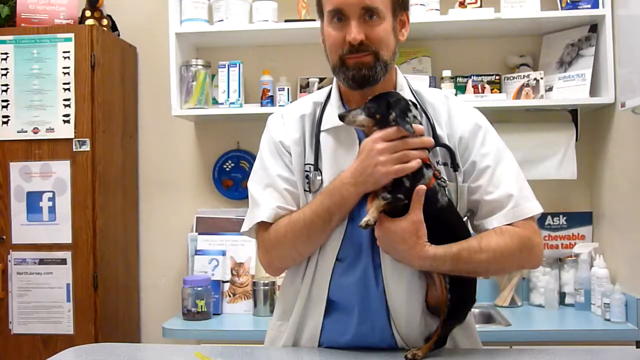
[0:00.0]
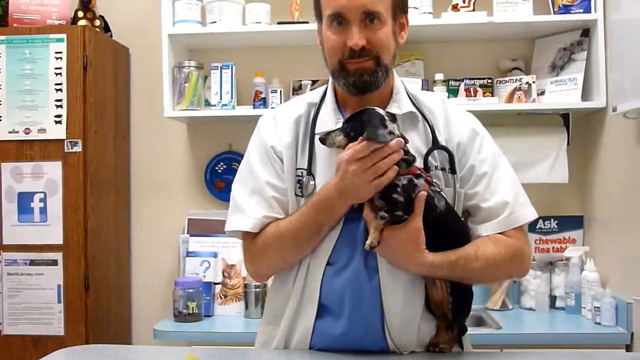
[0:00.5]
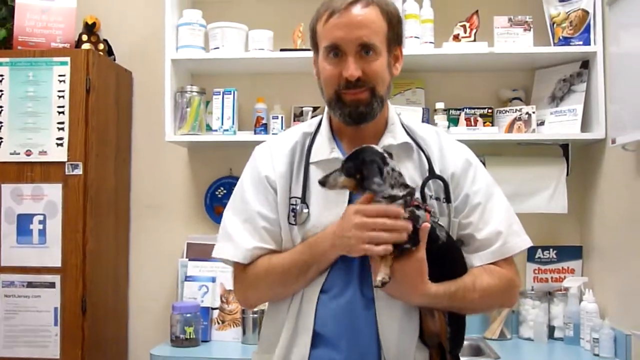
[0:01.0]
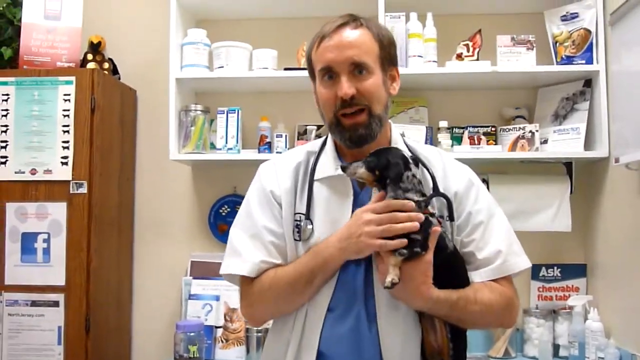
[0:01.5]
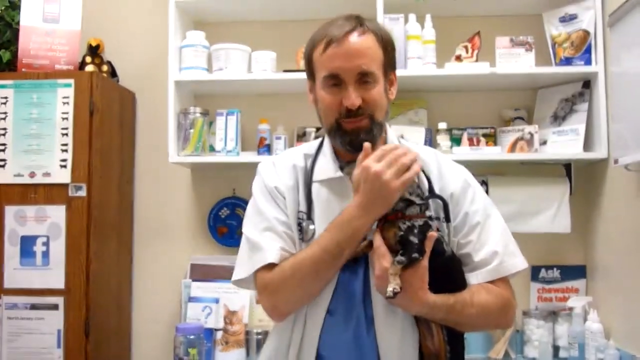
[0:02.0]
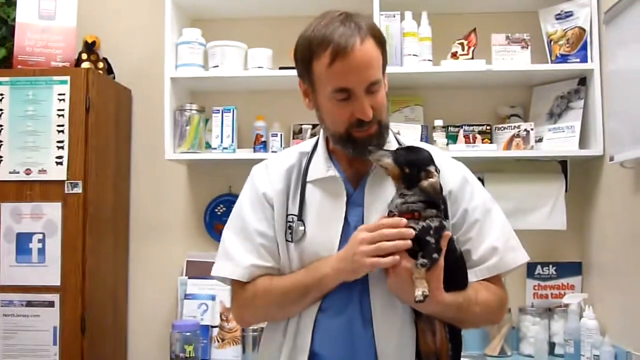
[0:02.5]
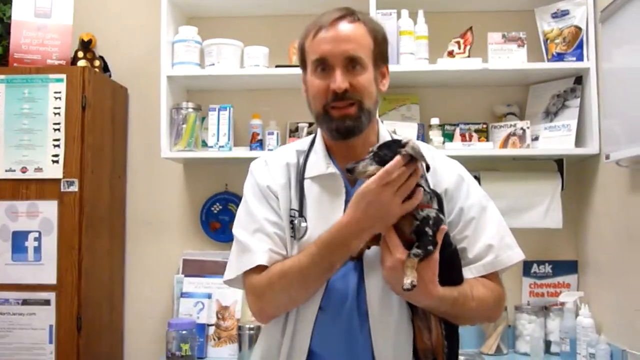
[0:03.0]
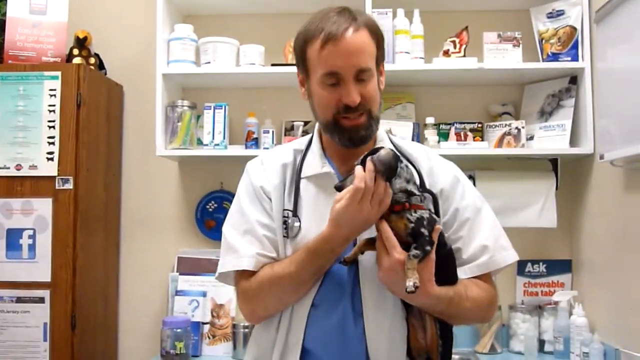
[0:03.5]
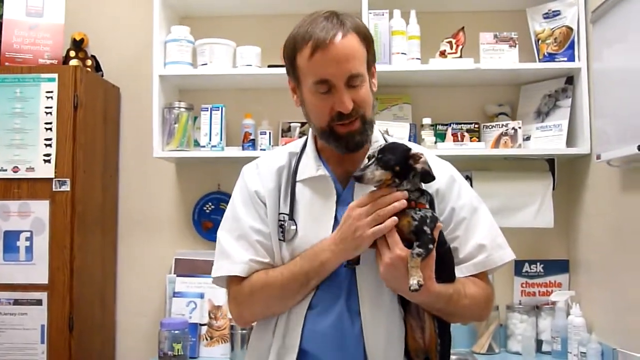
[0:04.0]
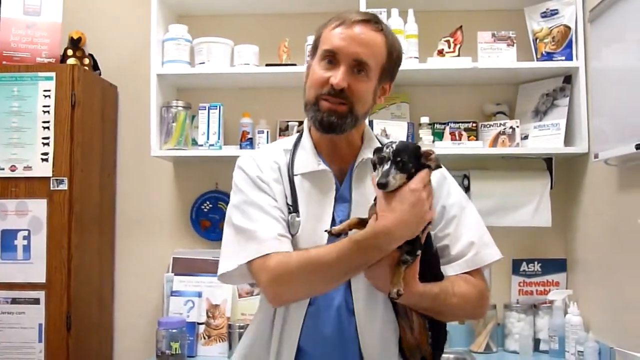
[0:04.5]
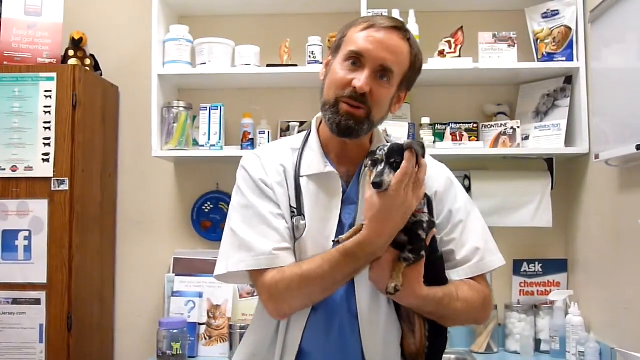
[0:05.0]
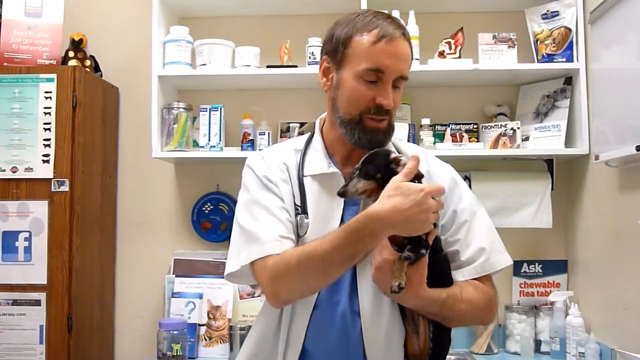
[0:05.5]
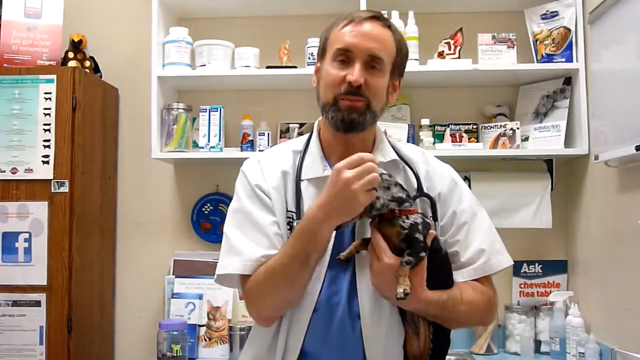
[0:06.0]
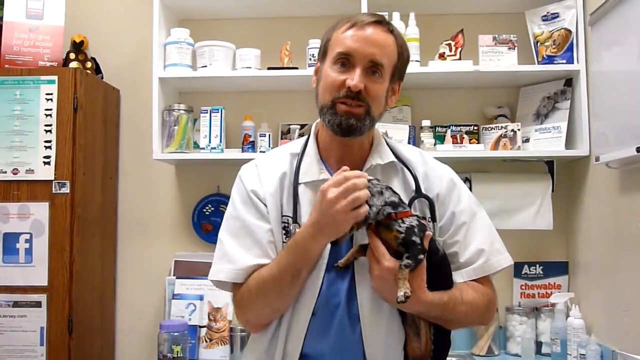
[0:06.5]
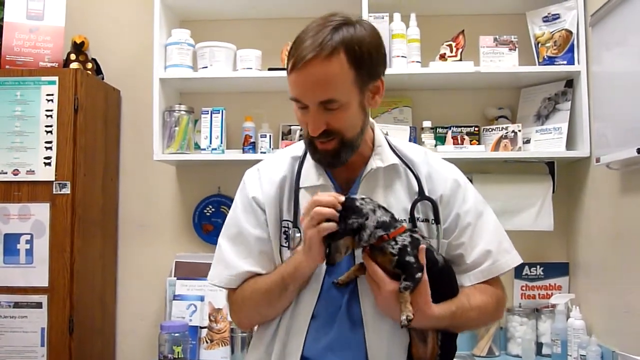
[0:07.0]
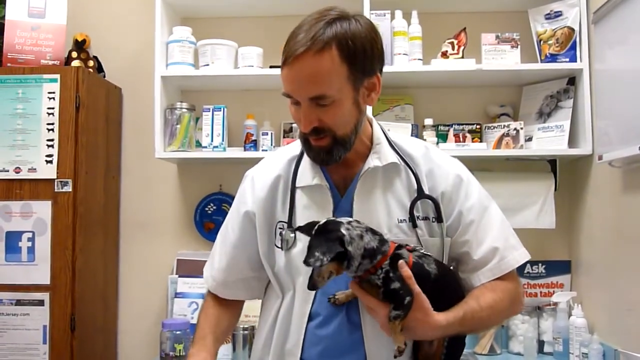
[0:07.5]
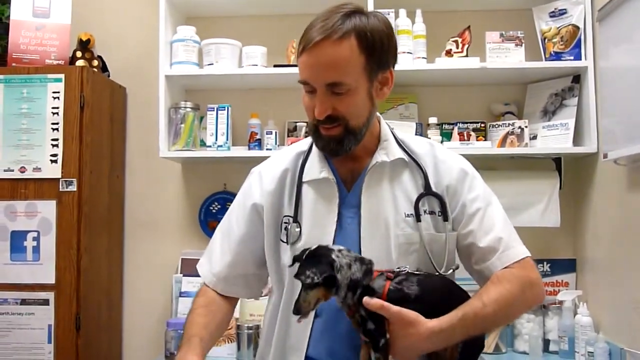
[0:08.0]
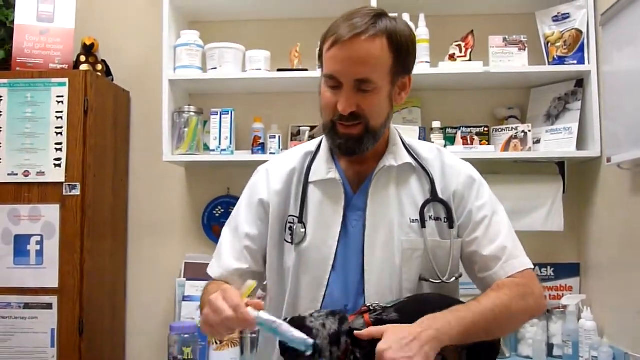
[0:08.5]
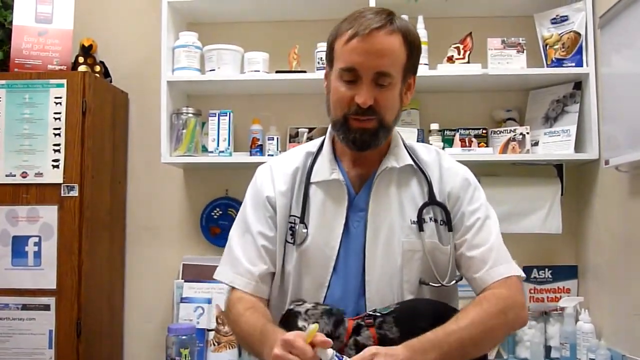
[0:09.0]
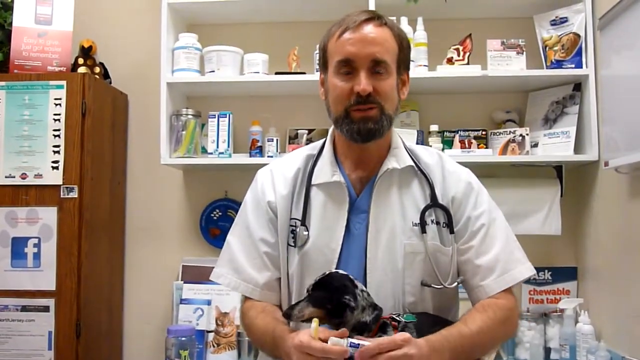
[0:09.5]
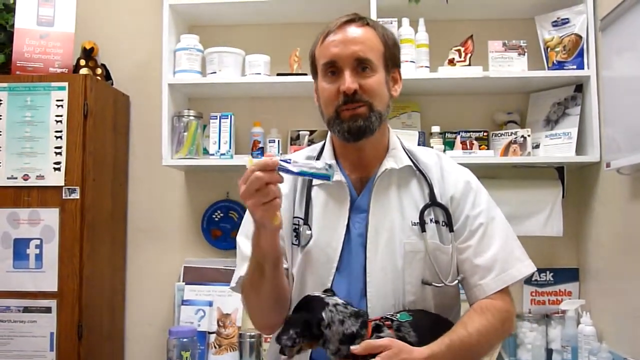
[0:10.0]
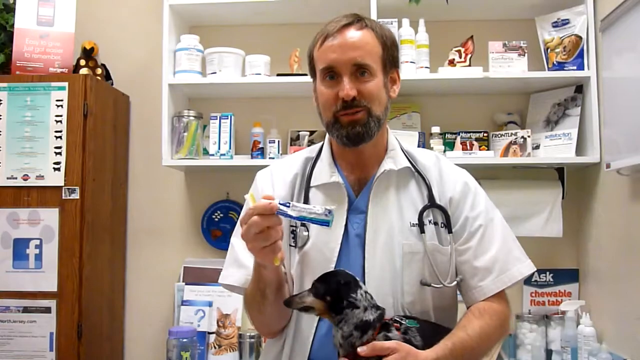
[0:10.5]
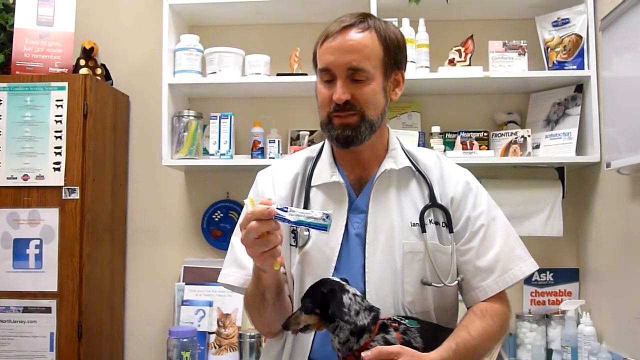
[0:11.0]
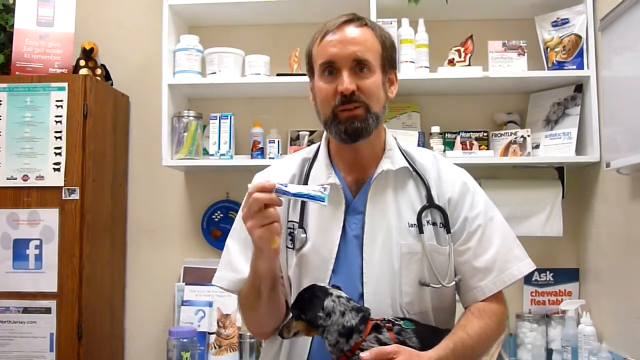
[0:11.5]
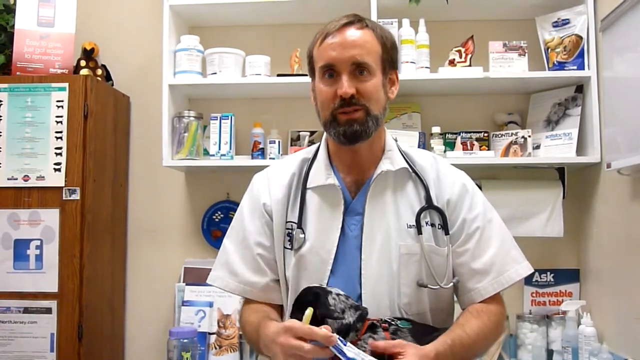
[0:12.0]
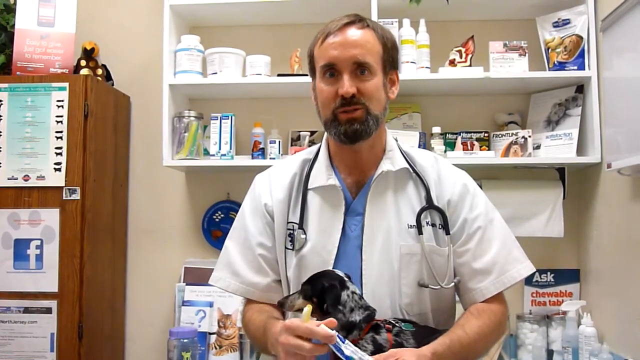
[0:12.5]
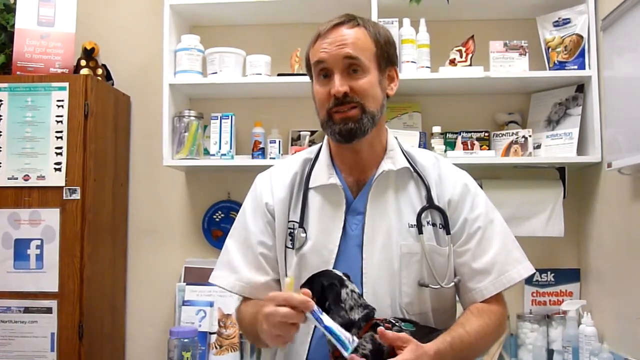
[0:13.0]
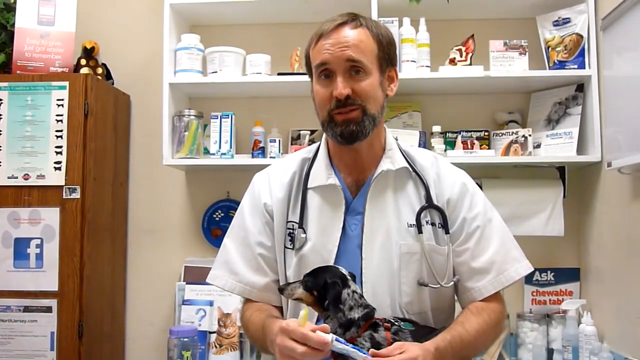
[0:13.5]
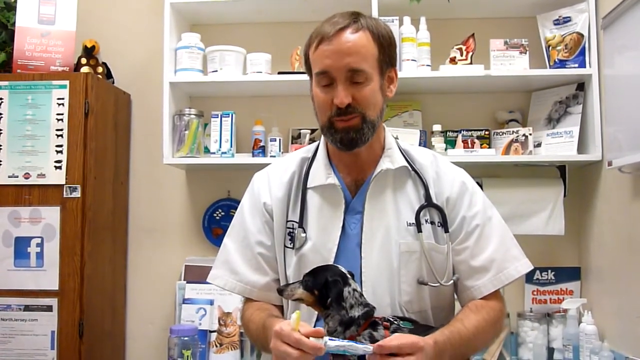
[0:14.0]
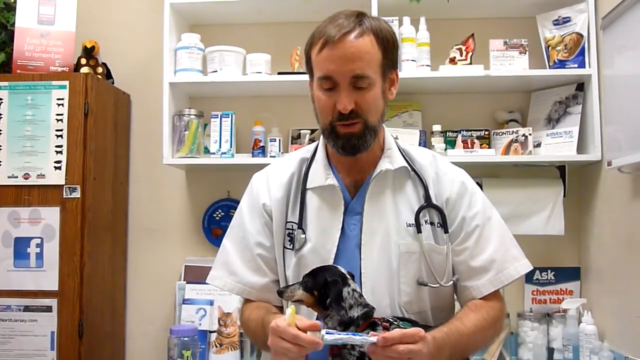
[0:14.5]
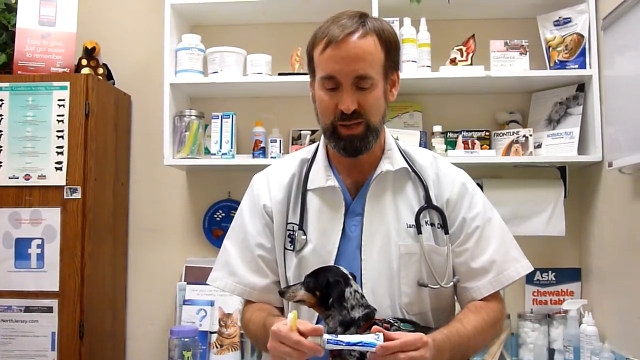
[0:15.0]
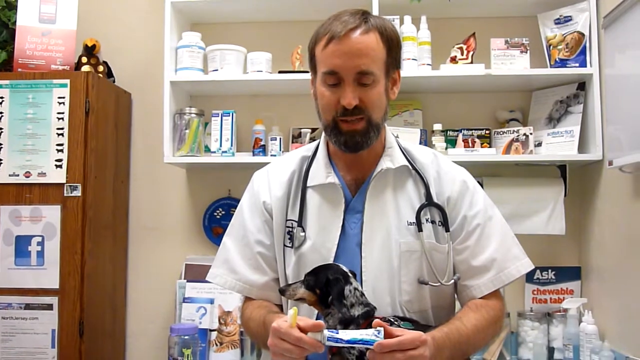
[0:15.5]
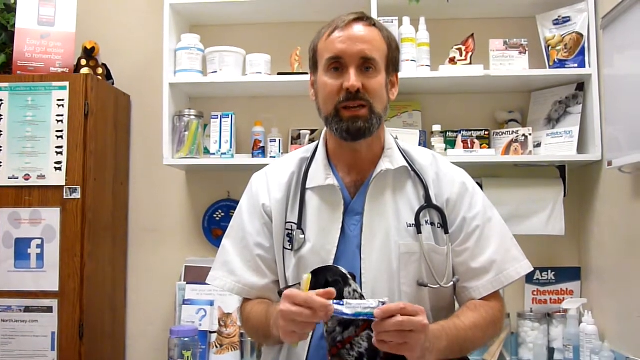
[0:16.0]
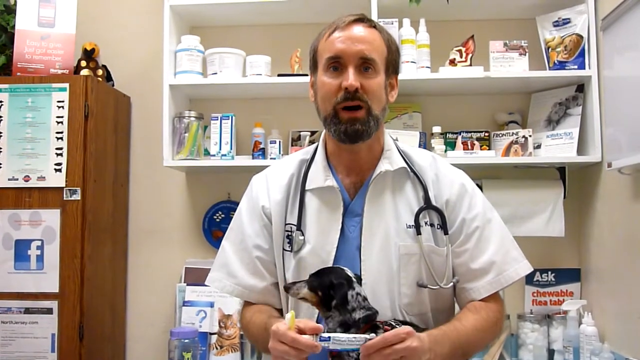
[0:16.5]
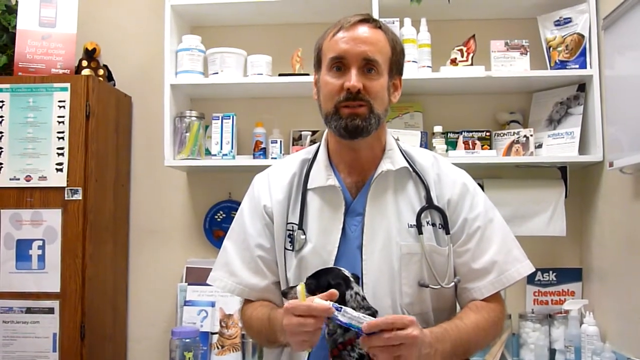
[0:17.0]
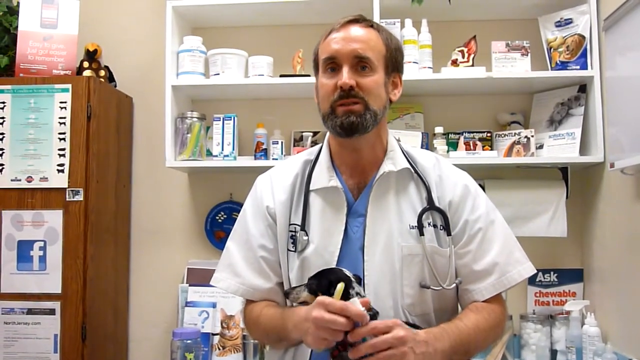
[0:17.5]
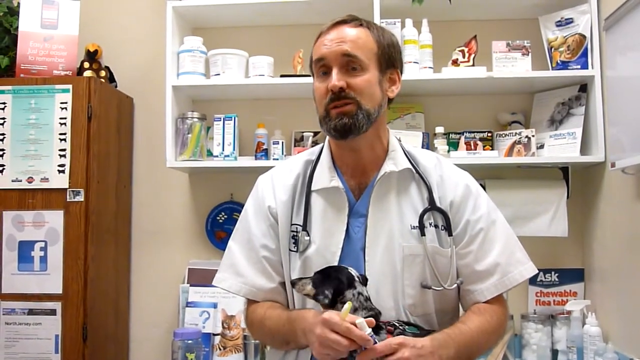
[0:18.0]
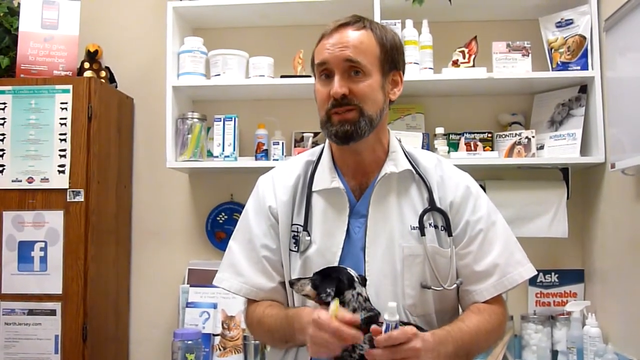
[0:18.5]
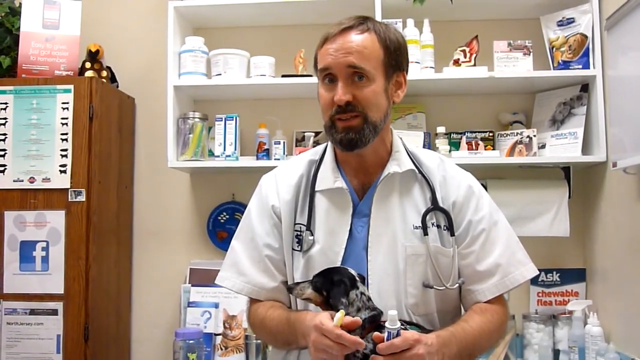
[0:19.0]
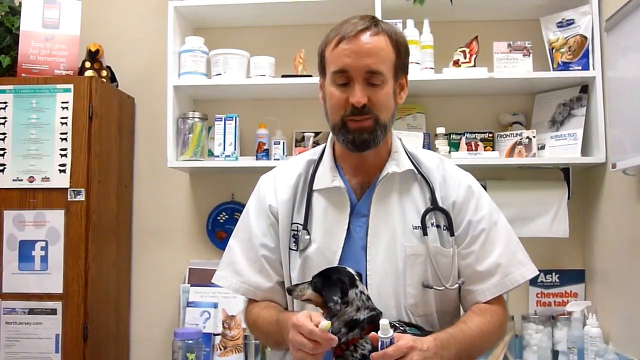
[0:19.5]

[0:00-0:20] The scene is a veterinarian's office. A veterinarian holds a small black and brown dog in his left arm, placing his right arm and hand around the dog's neck to brace him. He pets the dog nicely and then shows some type of topical paste that he might be putting on the dog for medical reasons. The vet wears a stethoscope, a white overcoat and a blue medical scrub underneath; he has a brown beard and mustache and brownish-black hair. Behind him are two-tiered shelves, both tiers filled with all kinds of animal foods, medications and animal products. The vet appears to enjoy his job.